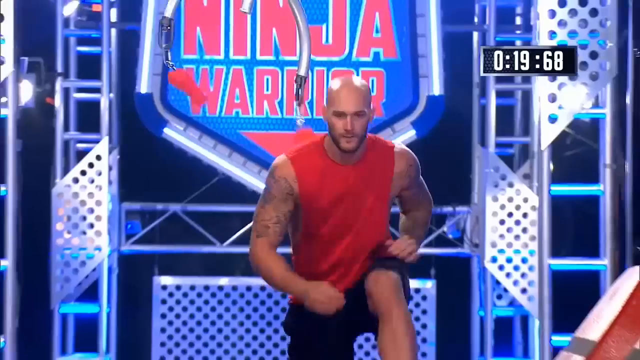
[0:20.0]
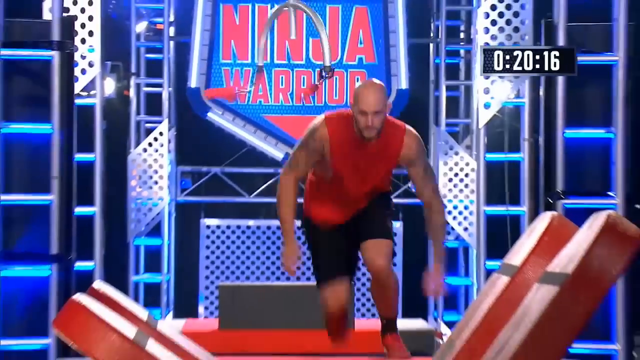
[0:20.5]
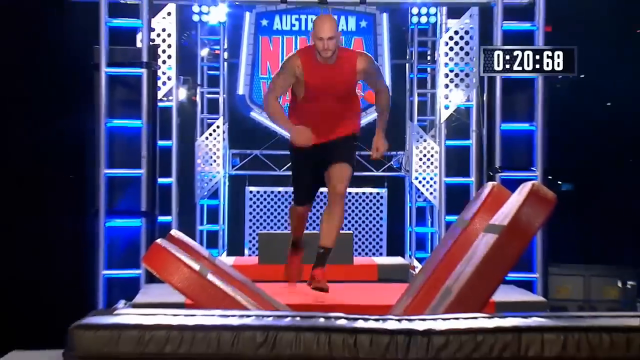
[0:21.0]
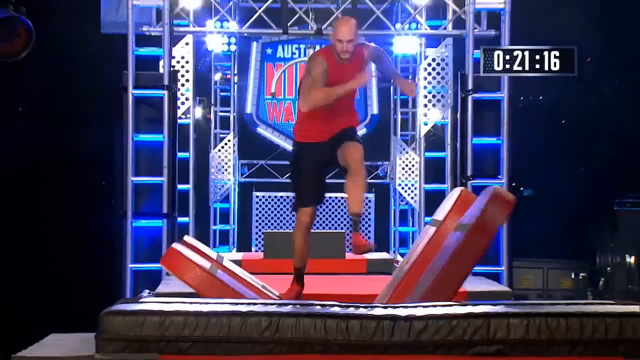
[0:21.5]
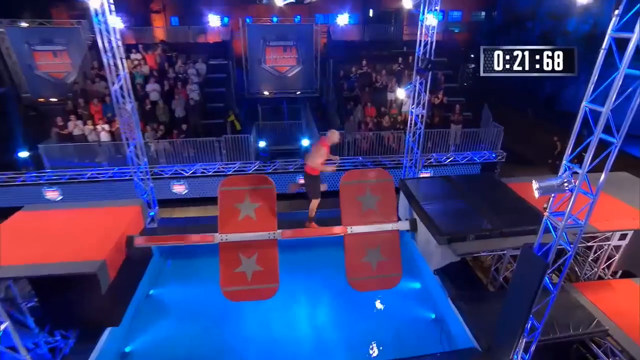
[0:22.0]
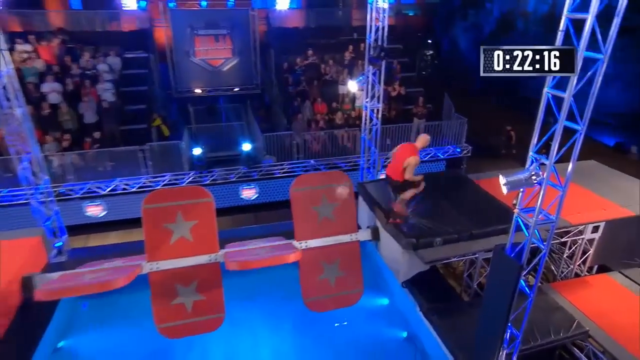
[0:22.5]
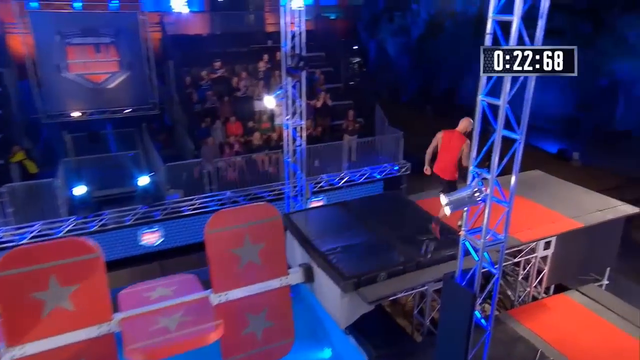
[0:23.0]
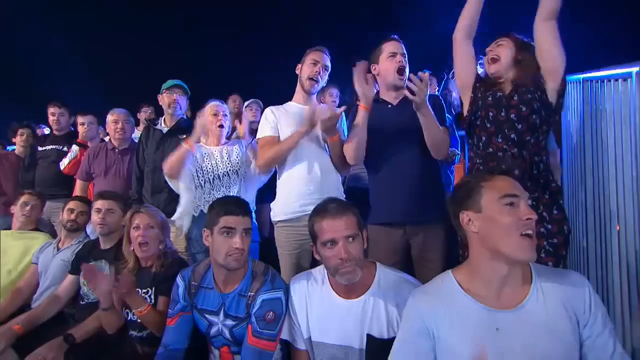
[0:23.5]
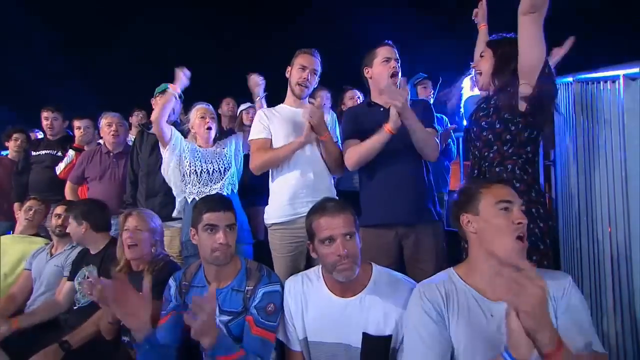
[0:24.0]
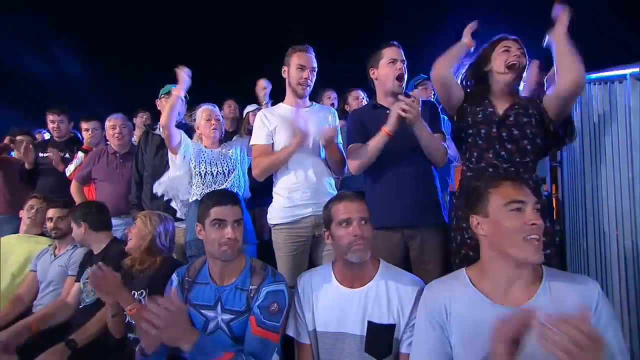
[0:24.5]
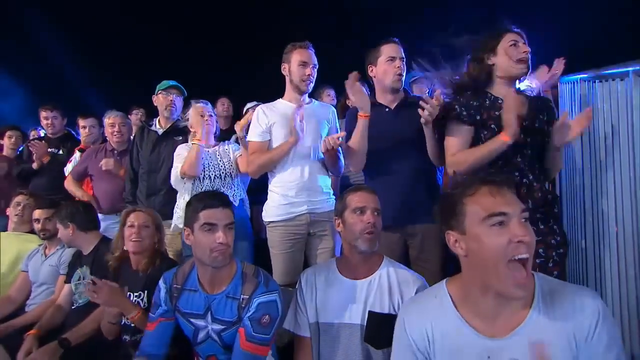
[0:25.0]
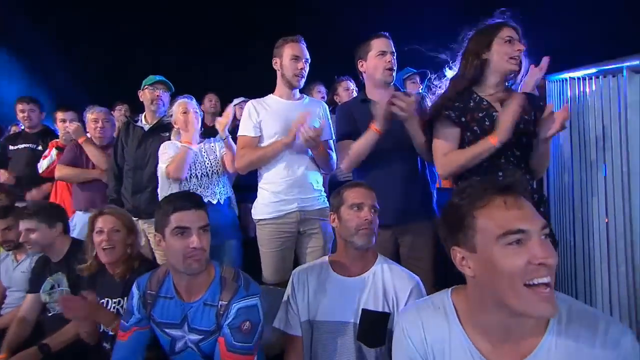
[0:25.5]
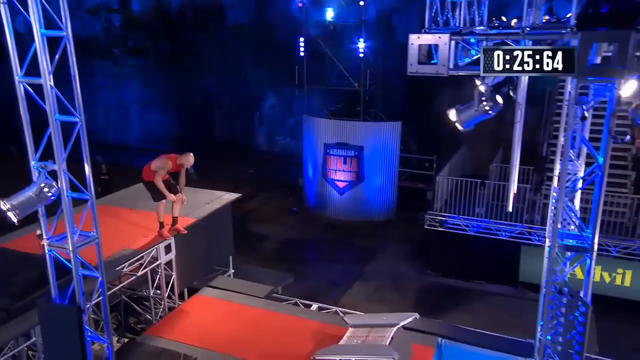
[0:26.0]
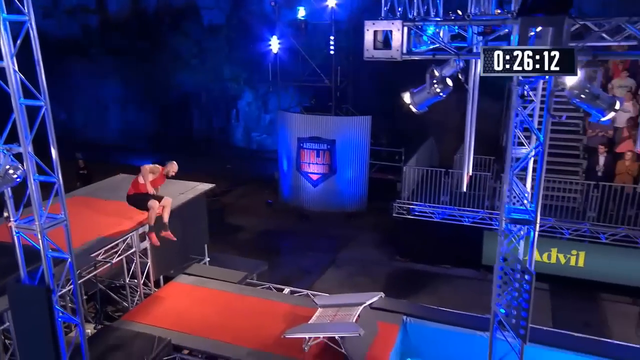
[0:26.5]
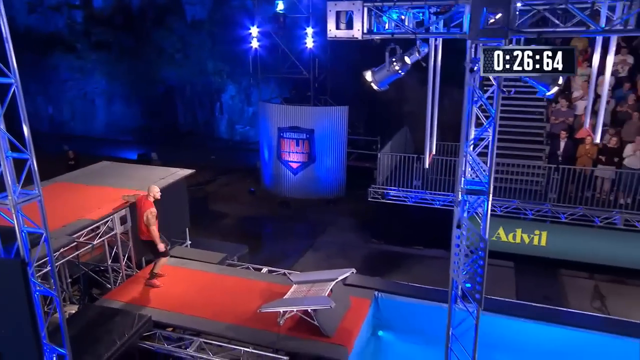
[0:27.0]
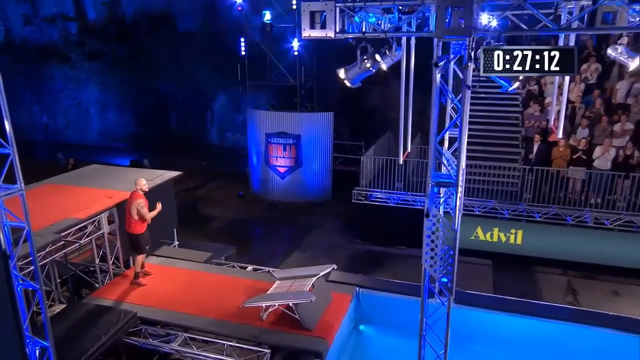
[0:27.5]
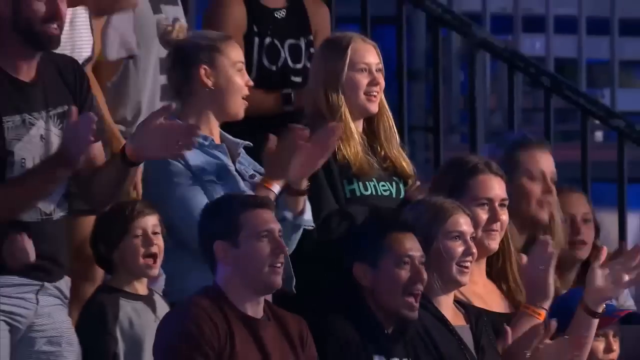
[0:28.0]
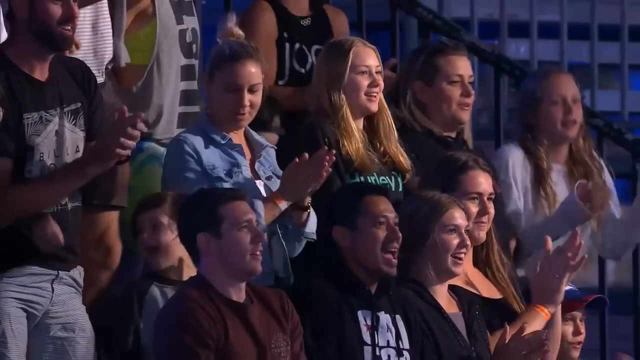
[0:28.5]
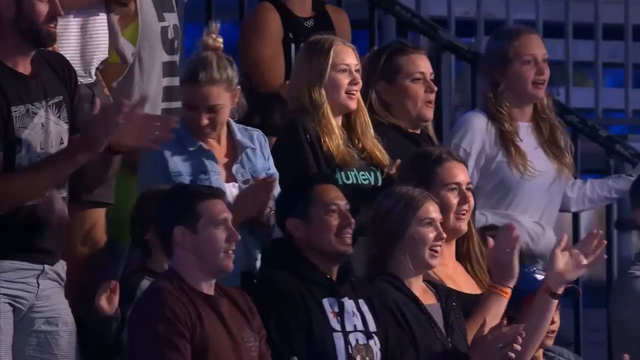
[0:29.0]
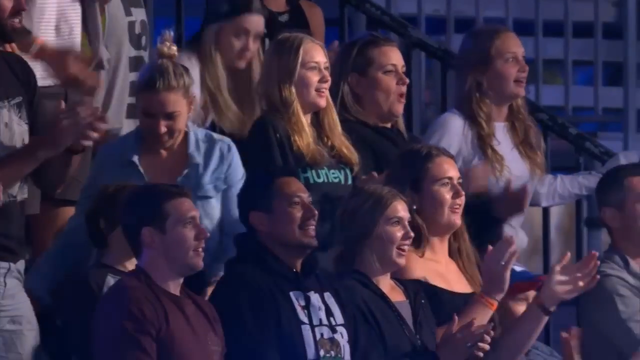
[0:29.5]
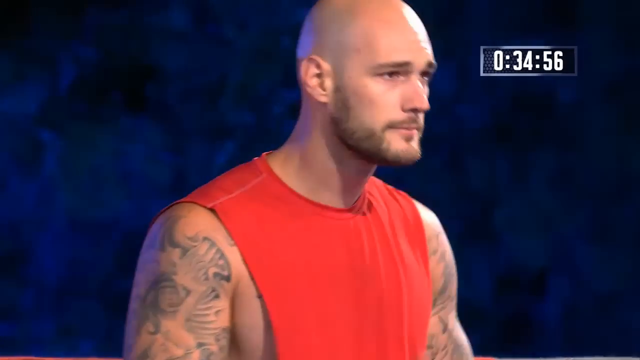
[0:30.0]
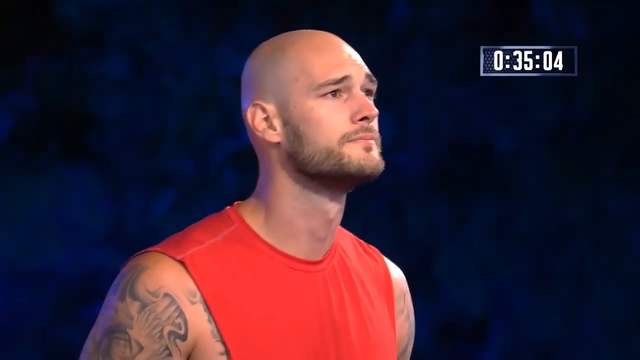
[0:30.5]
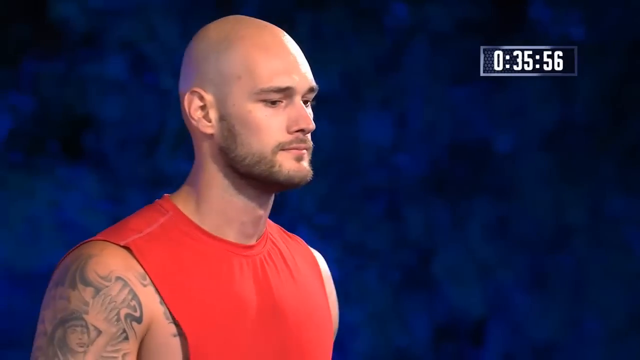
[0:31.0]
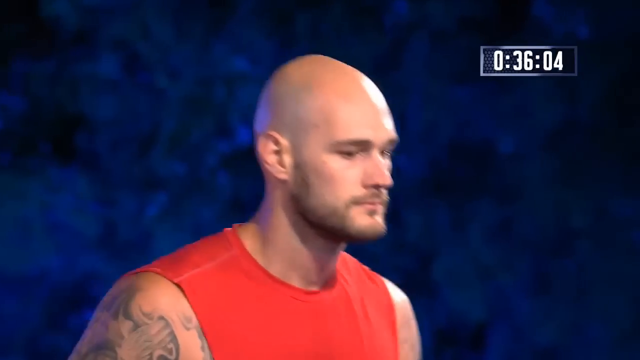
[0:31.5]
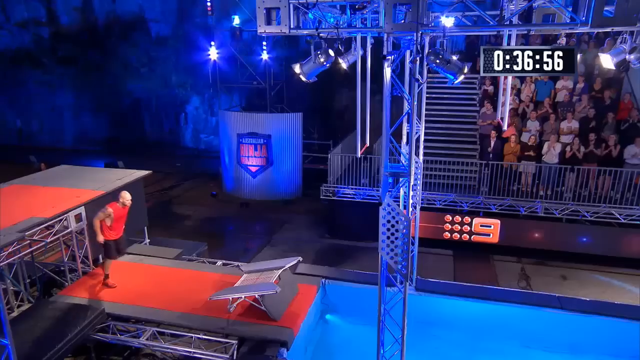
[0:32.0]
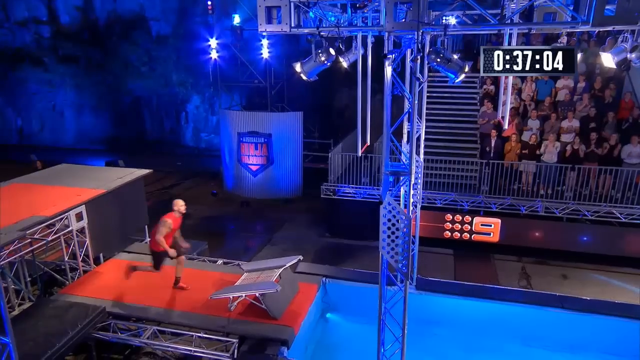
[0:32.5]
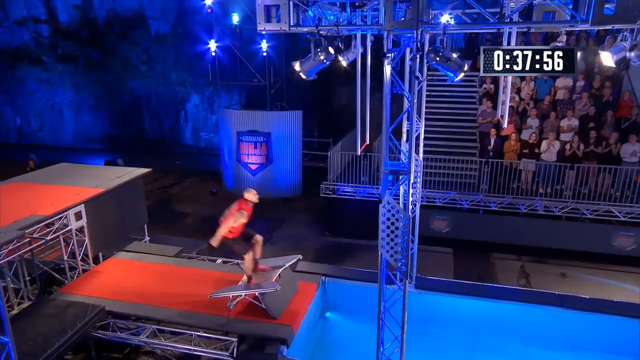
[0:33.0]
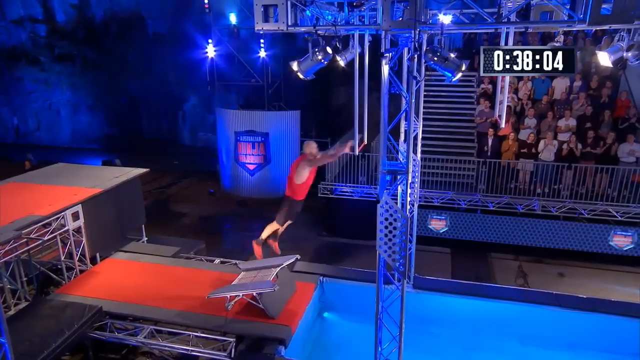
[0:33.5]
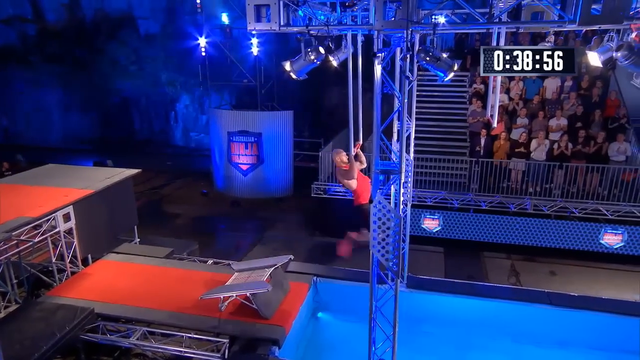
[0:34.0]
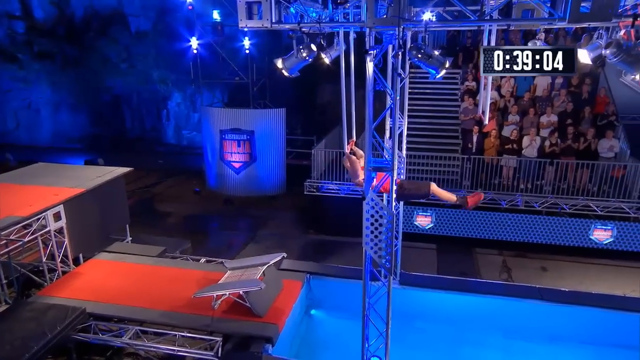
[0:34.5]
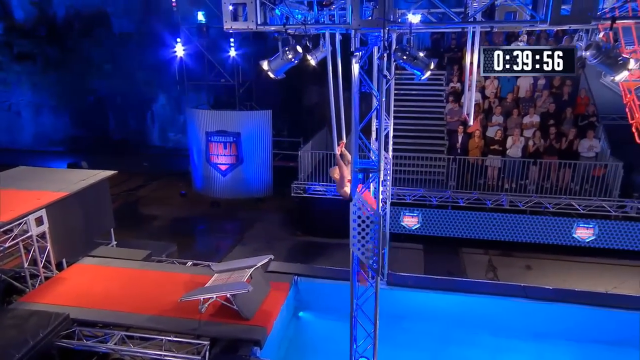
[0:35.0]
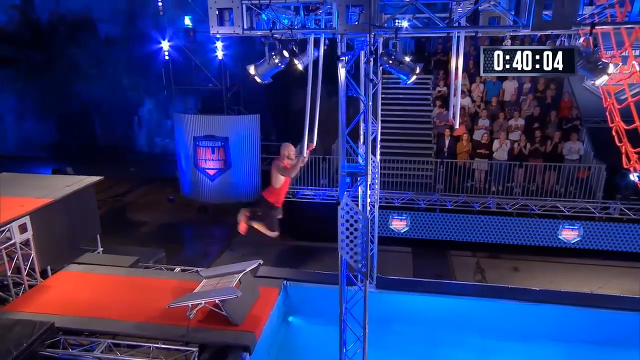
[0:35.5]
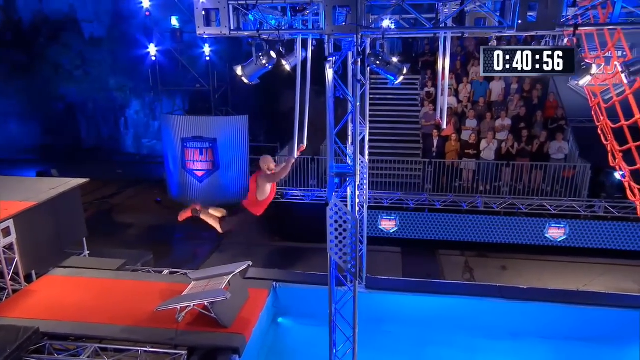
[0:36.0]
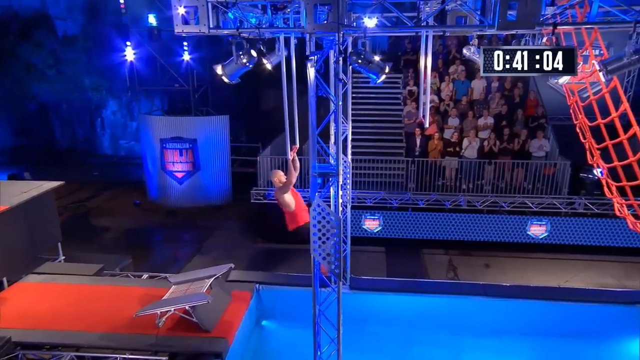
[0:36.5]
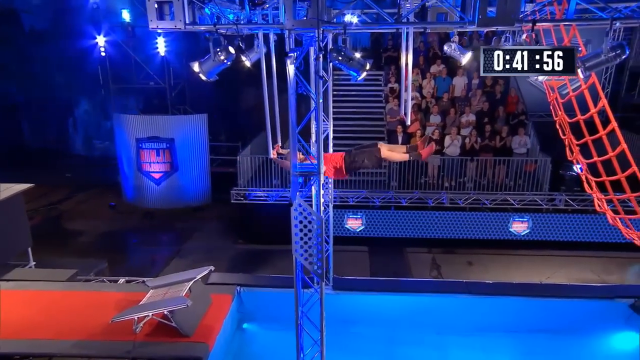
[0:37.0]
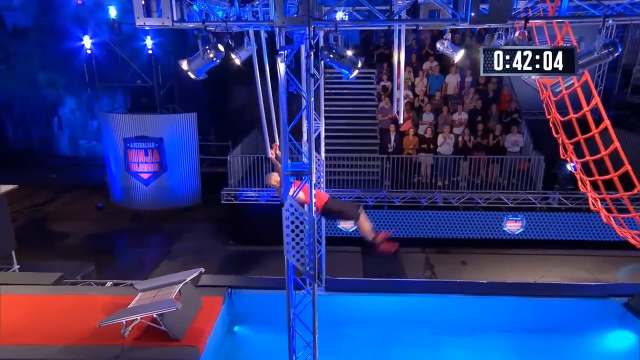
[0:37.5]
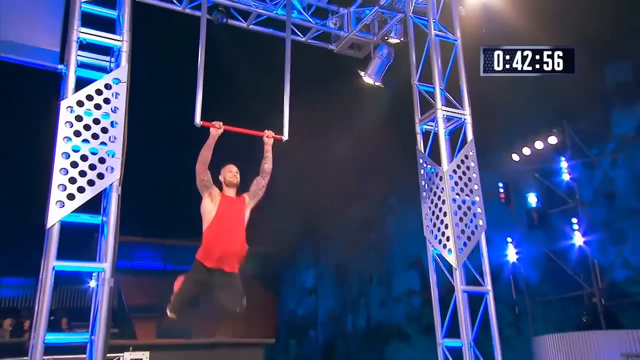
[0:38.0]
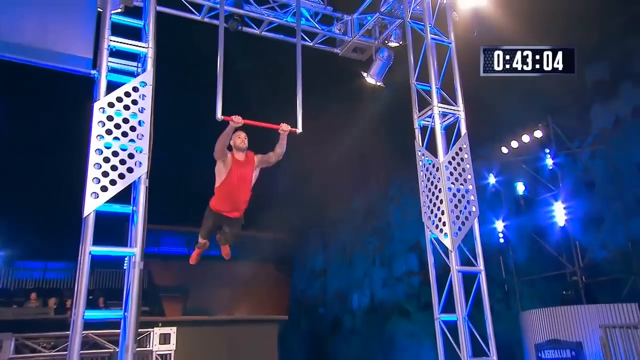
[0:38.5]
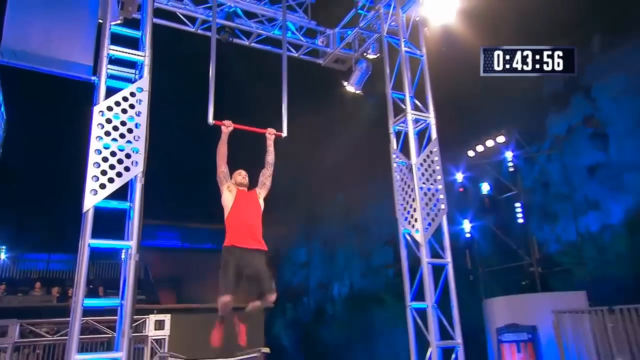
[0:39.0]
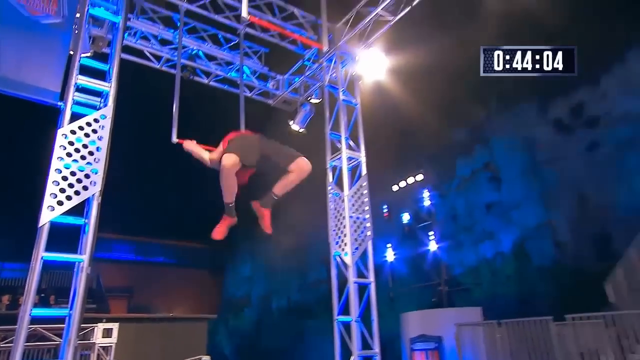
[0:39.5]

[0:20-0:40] The same participant finishes a couple of obstacles as people cheer him on. He has tattoos on his body. He jumps while holding on to metal, working to get from one end of the course to the other, running over boards that could make him fall. He jumps and holds a bar that helps him get across. He appears to be doing well, as people applaud him.